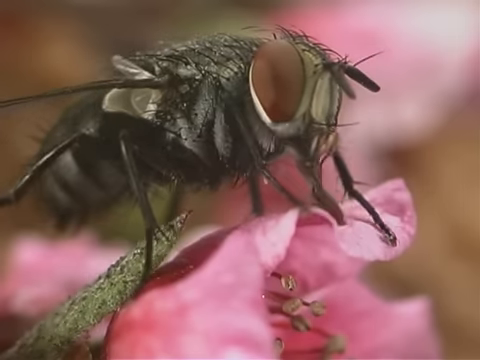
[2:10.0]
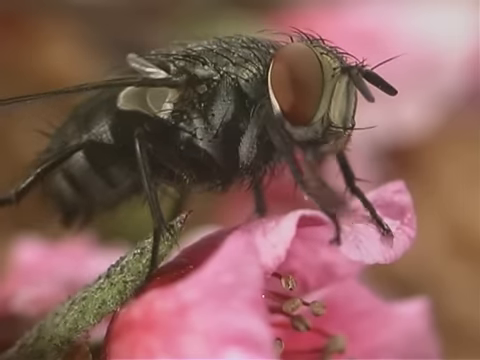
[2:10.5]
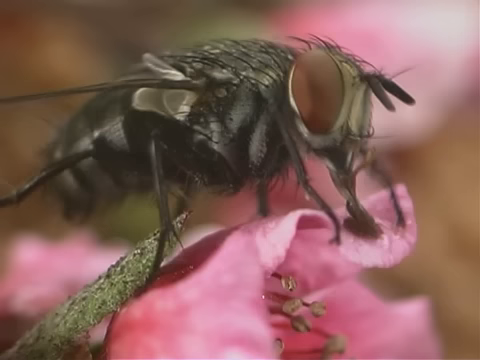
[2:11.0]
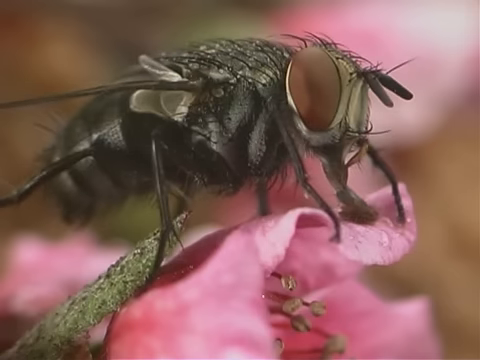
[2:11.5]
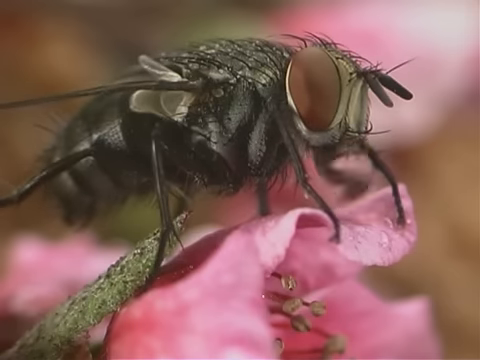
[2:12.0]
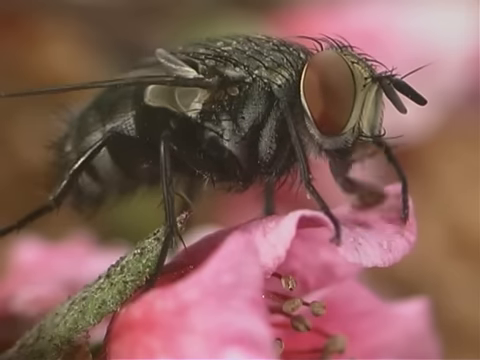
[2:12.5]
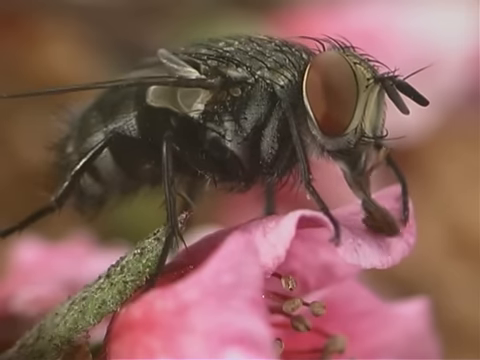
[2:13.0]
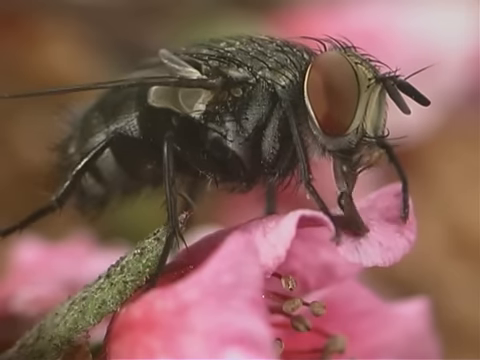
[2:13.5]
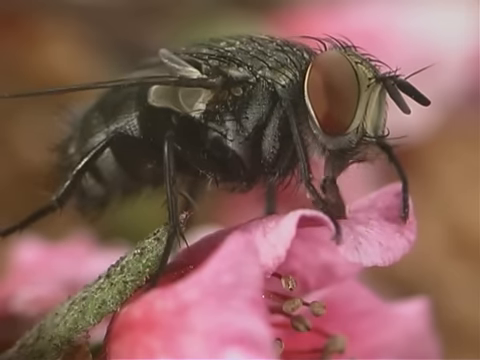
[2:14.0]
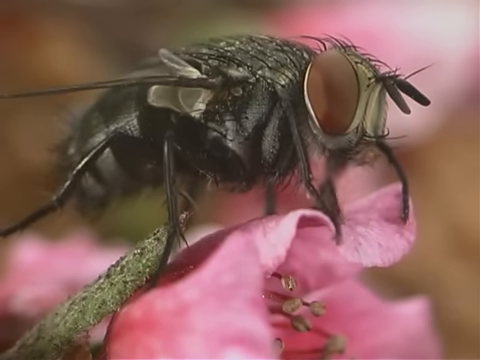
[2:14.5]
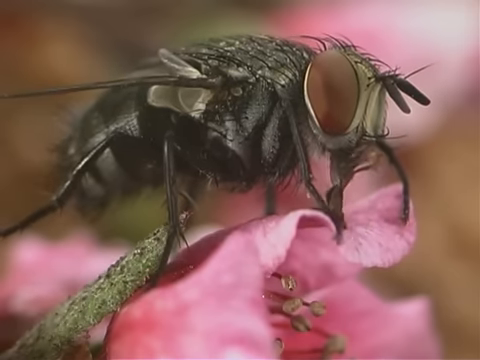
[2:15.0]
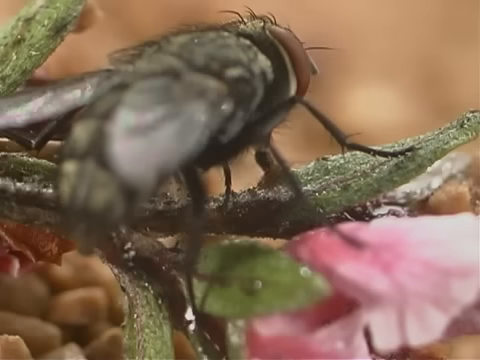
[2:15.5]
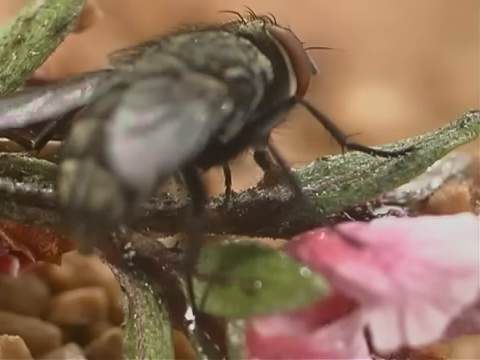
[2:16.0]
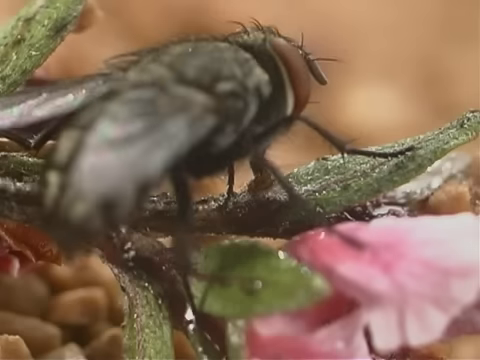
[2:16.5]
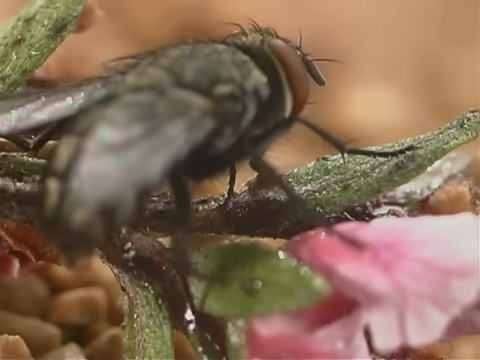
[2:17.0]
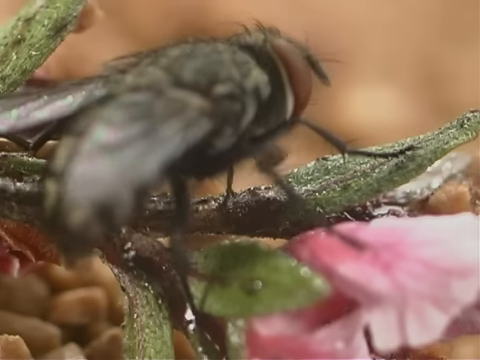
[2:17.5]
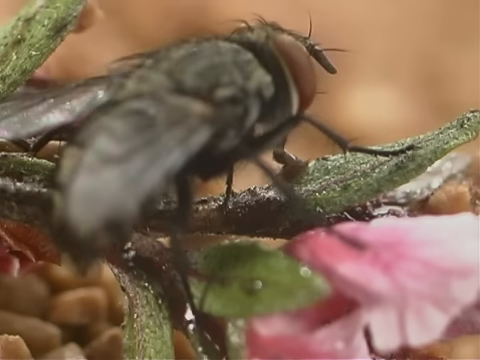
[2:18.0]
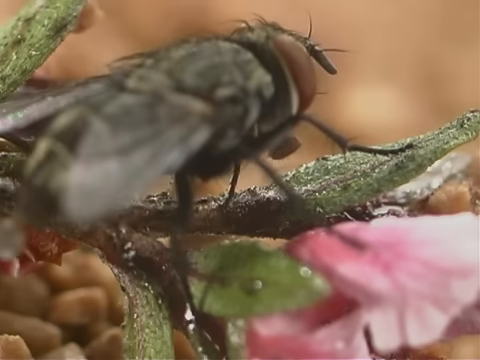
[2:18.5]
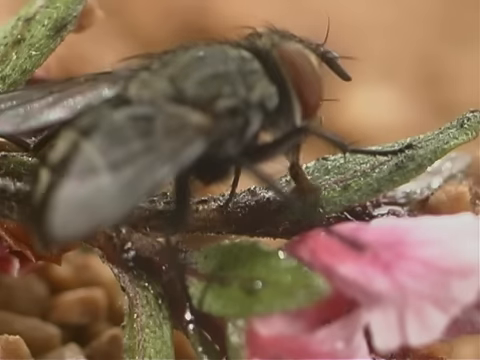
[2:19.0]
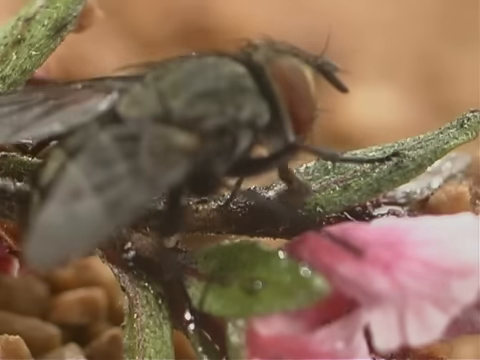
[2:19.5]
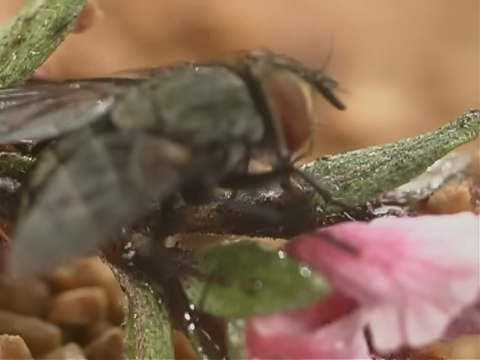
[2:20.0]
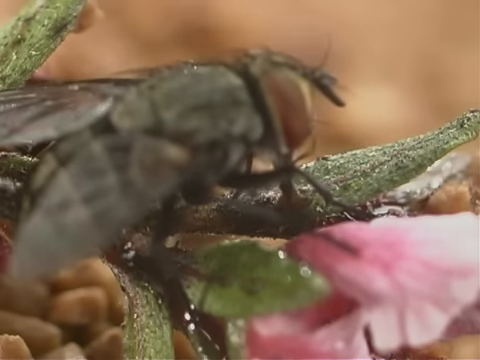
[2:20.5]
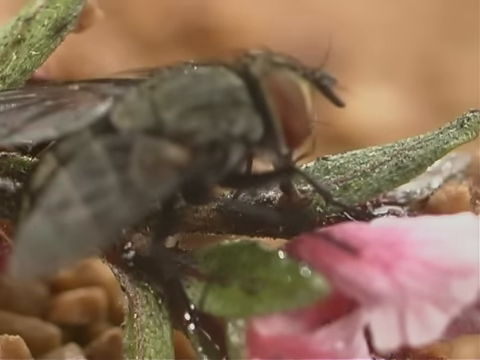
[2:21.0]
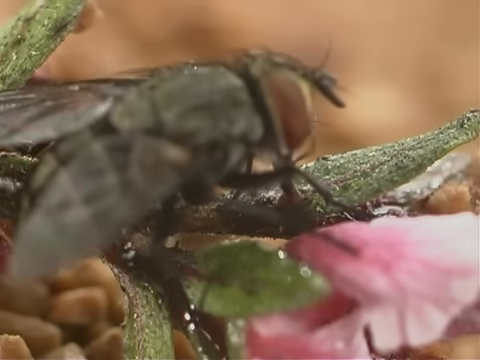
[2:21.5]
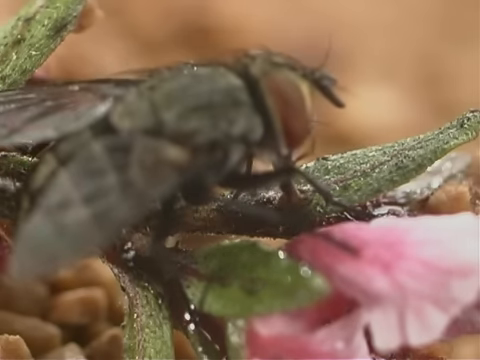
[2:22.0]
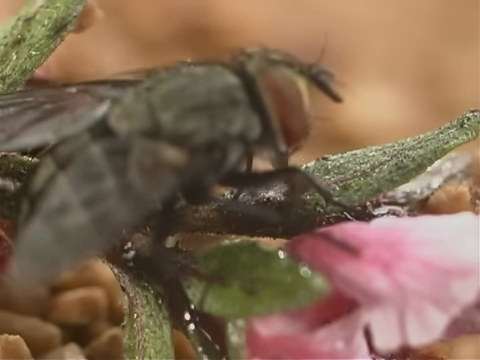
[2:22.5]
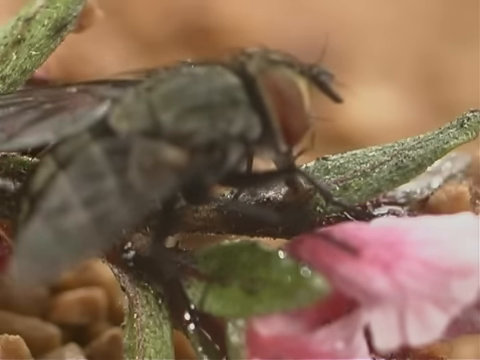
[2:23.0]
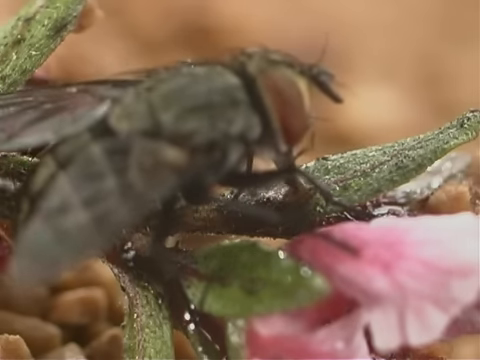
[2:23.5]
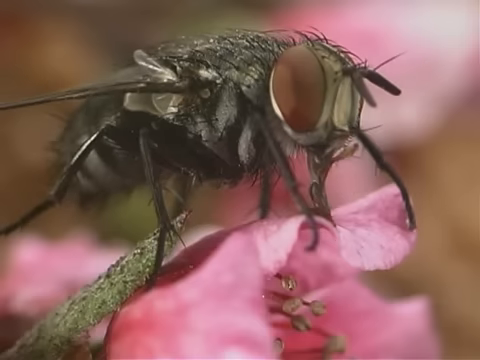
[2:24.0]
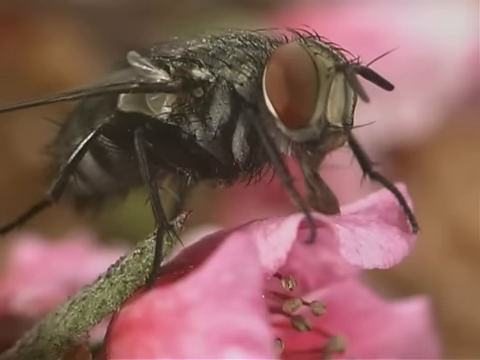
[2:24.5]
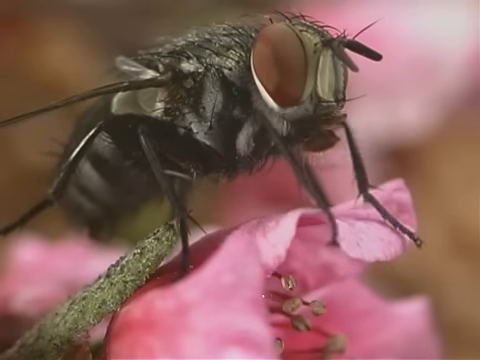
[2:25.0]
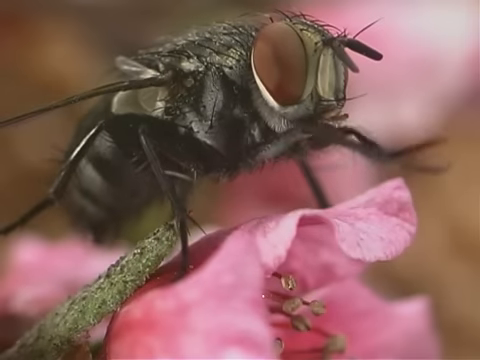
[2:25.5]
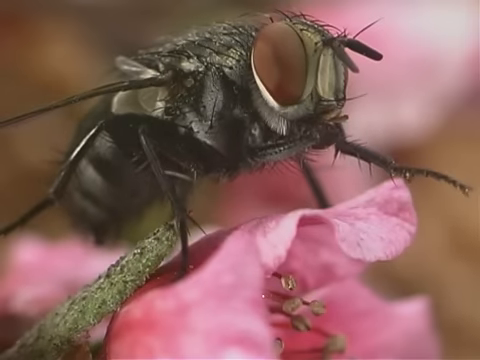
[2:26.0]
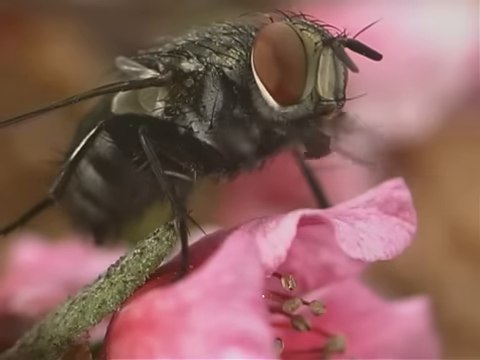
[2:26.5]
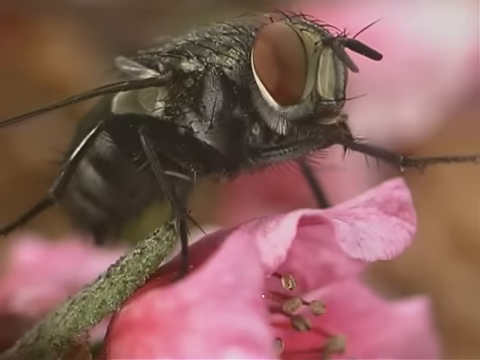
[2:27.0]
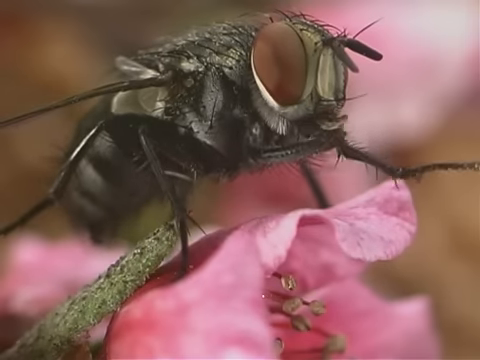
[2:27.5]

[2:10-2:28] A fly is seen from its right side, showing a wing, the legs, one big eye, the antennae and some little hairs coming out of the top of its head, which is a green colour. The fly sits on a pink flower and moves its mouth over the flower, apparently drinking the tiny water droplets, moving it left to right, back and forth, perhaps to get a drink. The view then shows the fly from the back toward its right side, on a green leaf that is part of the pink flower, where it again uses its mouth and appears to be taking in the water settled on the leaf. The video then goes back to the fly on the pink flower, still taking up water from the flower with its mouth, and then it rubs its front legs together again. The fly combines its two front legs and its mouth, doing something with the water on the pink leaf, in a very close-up shot.